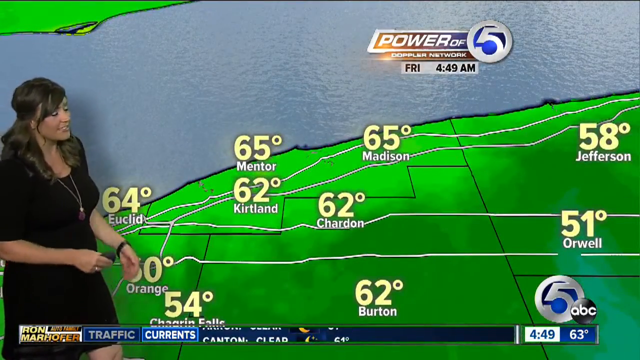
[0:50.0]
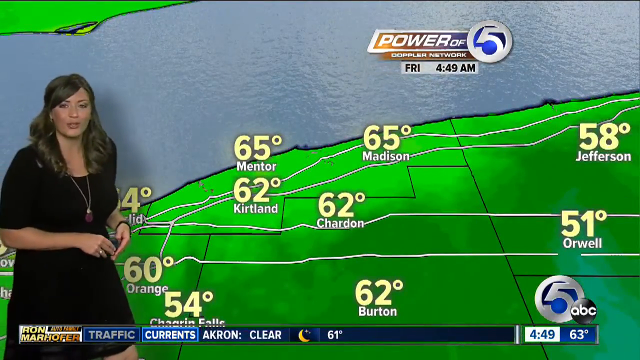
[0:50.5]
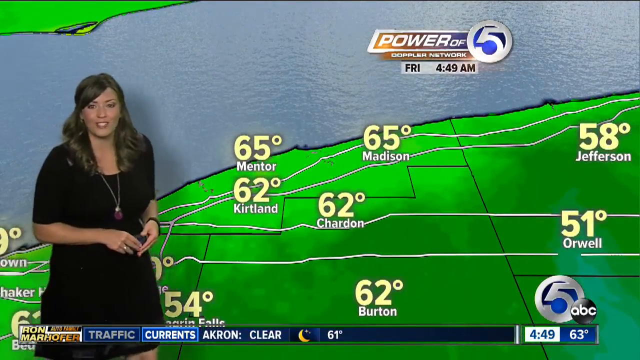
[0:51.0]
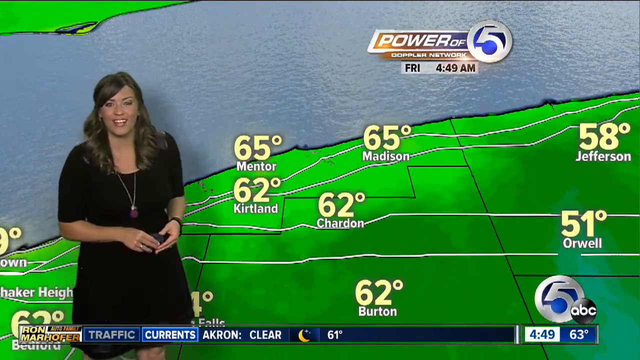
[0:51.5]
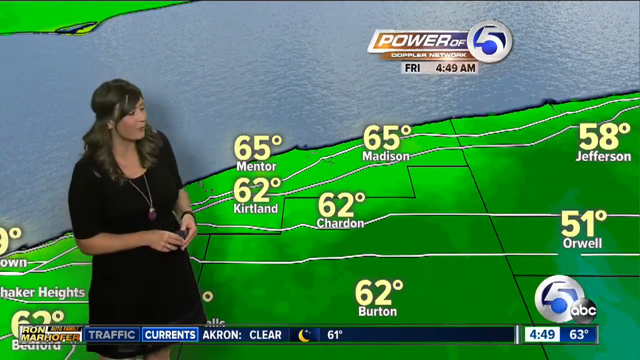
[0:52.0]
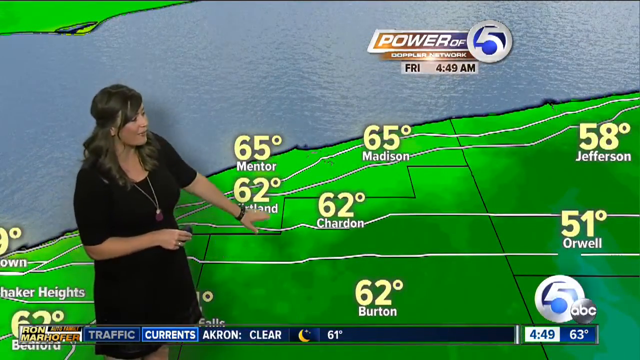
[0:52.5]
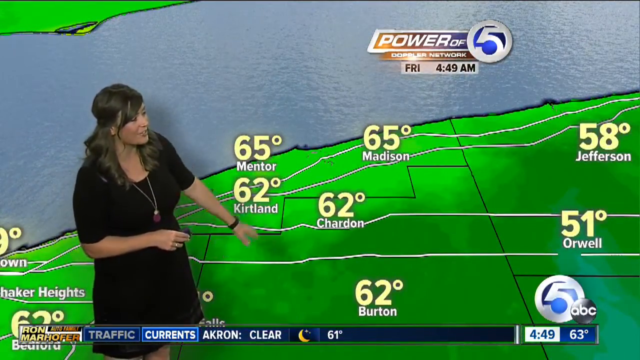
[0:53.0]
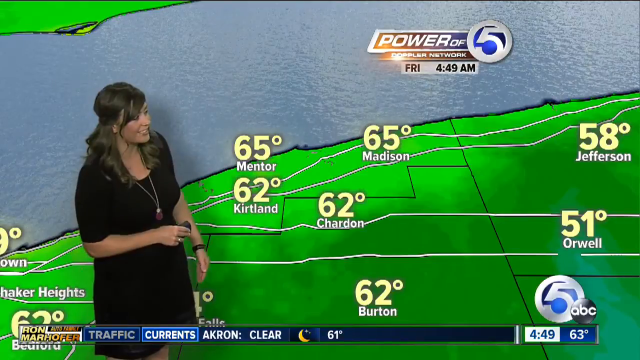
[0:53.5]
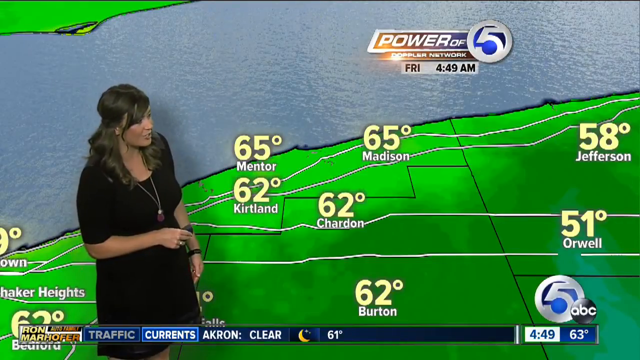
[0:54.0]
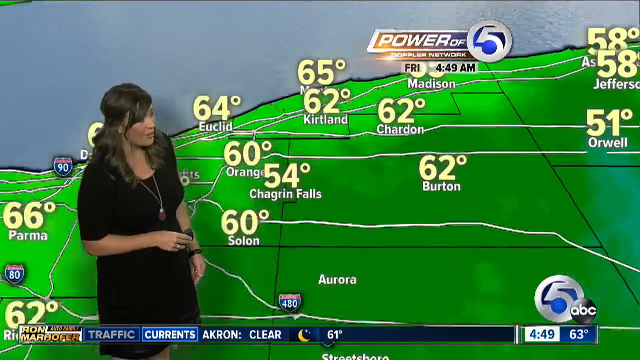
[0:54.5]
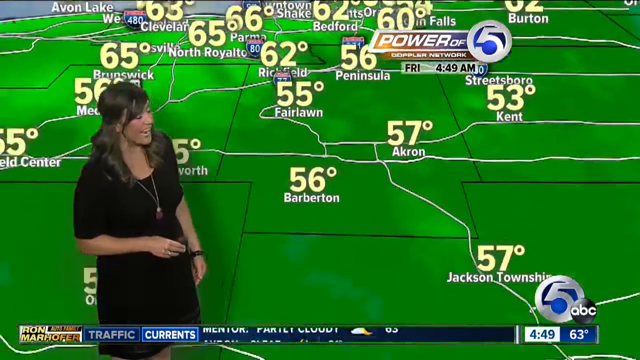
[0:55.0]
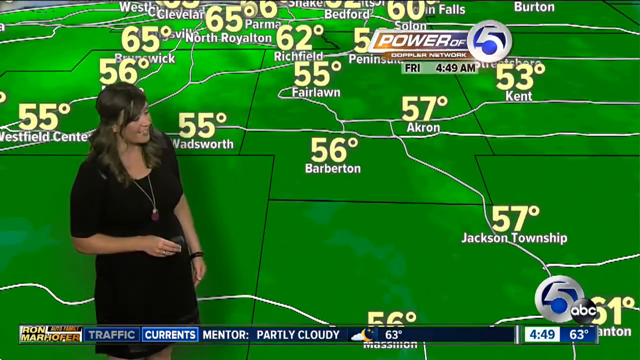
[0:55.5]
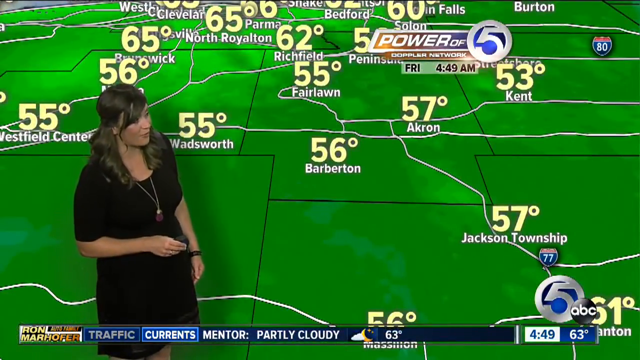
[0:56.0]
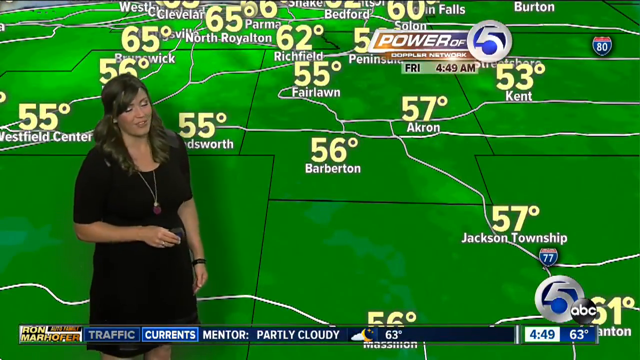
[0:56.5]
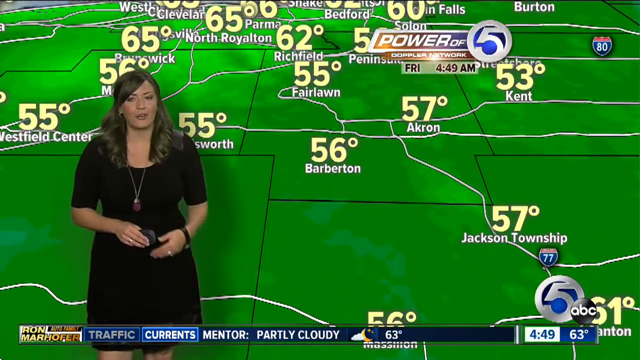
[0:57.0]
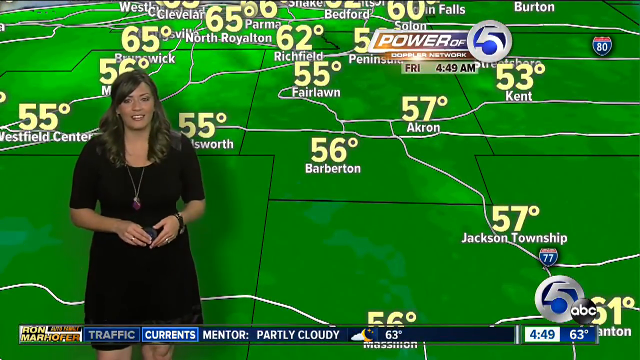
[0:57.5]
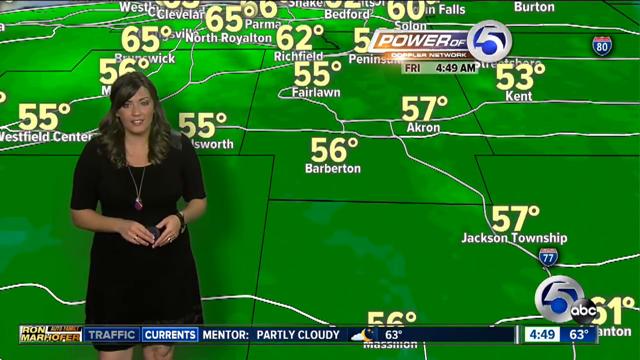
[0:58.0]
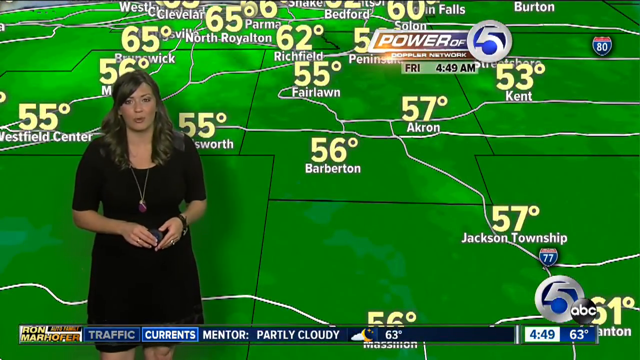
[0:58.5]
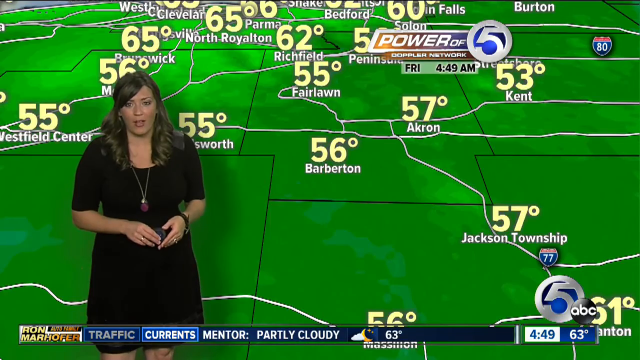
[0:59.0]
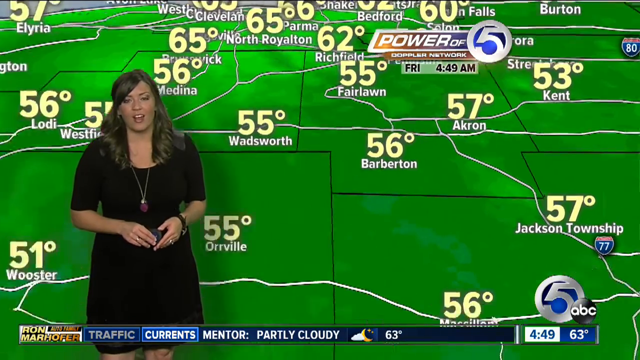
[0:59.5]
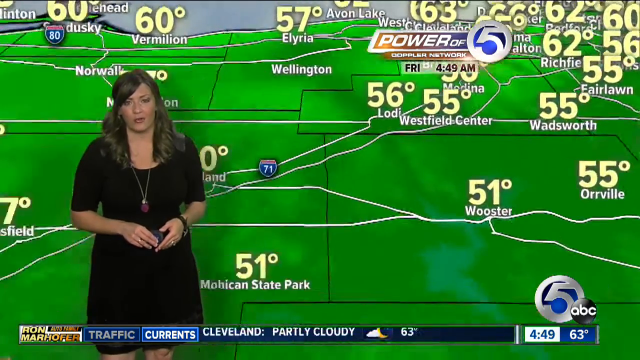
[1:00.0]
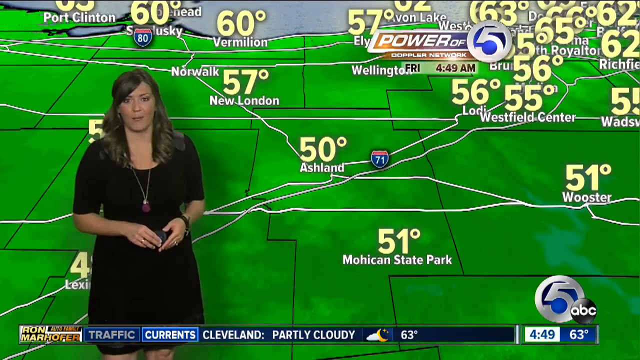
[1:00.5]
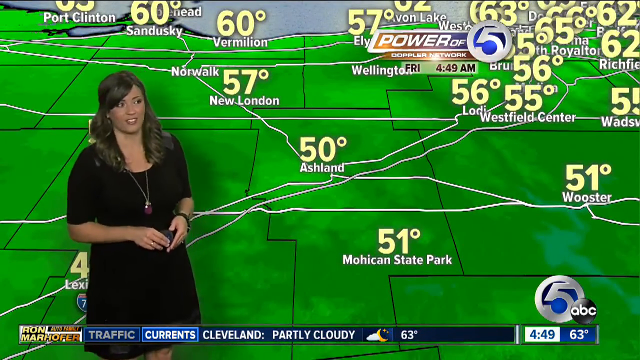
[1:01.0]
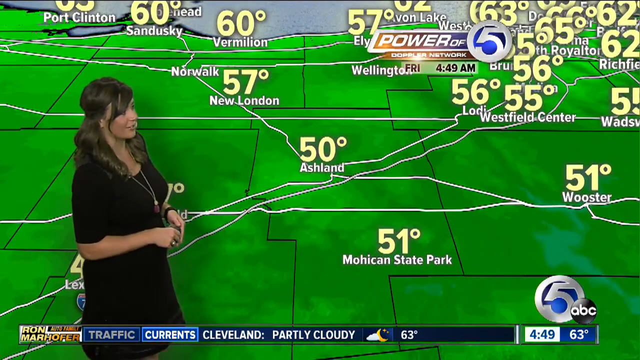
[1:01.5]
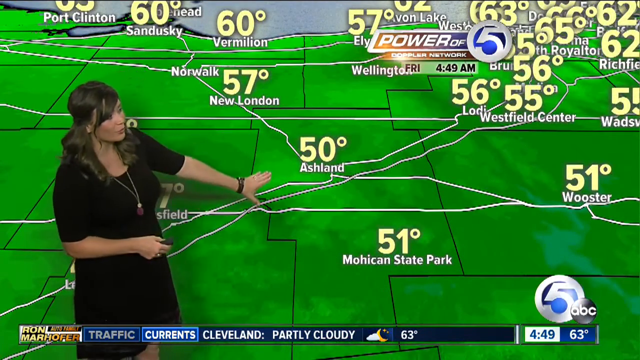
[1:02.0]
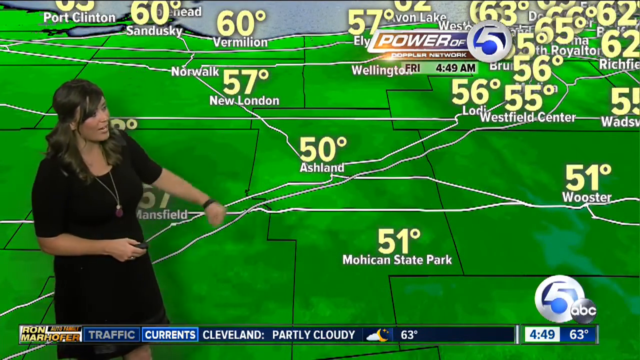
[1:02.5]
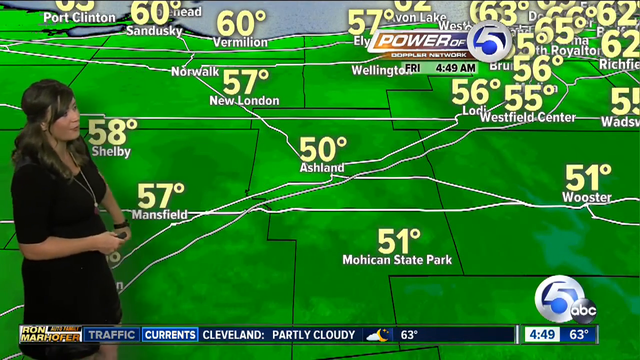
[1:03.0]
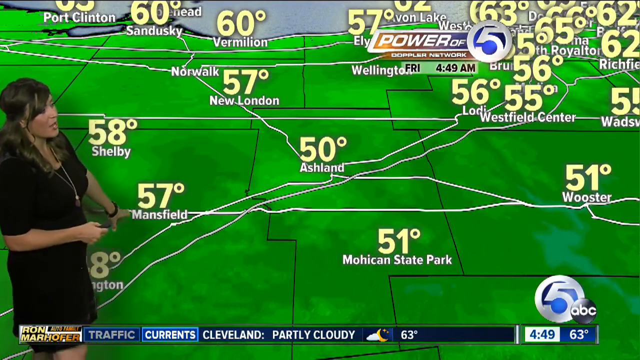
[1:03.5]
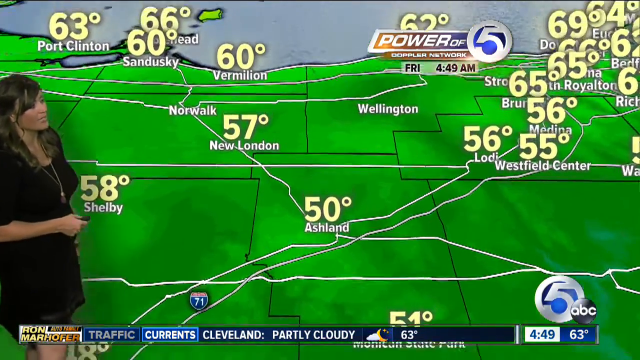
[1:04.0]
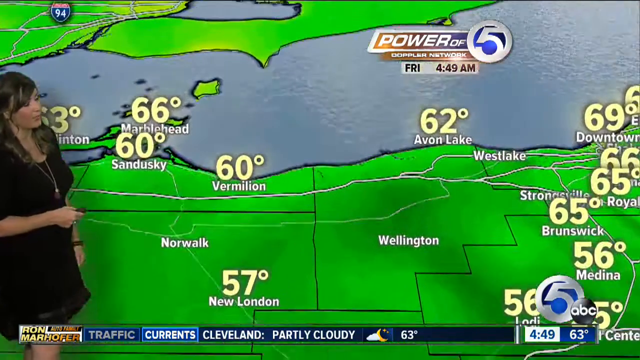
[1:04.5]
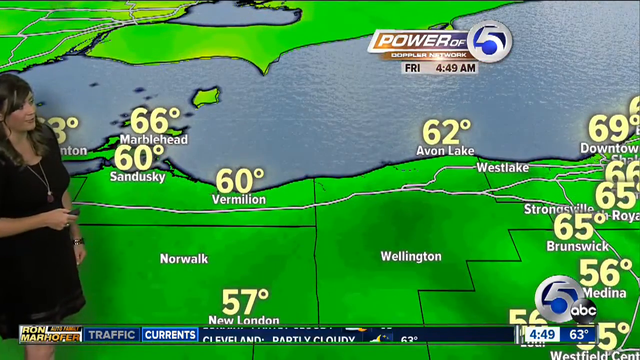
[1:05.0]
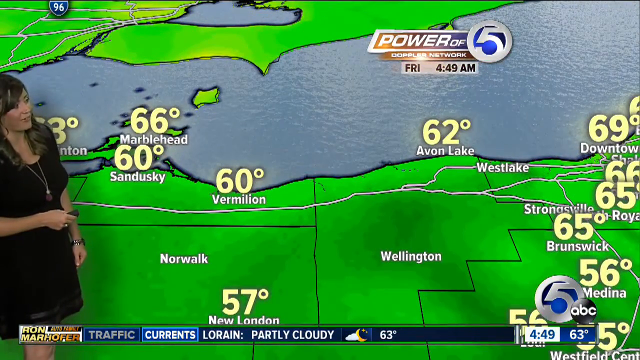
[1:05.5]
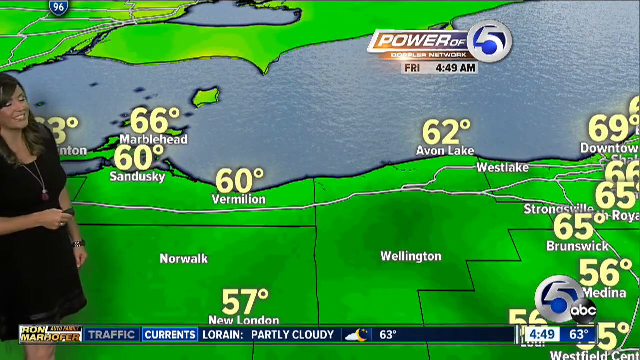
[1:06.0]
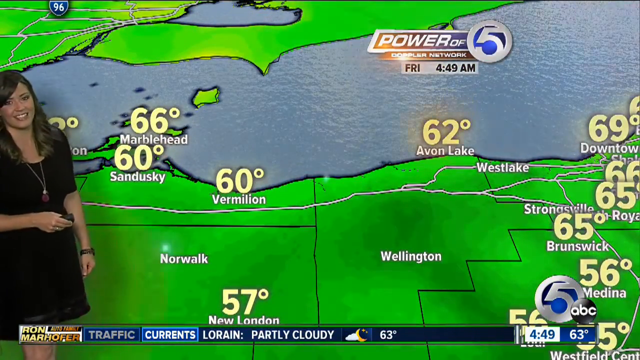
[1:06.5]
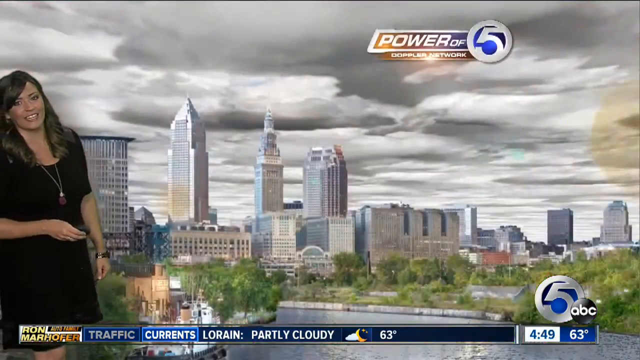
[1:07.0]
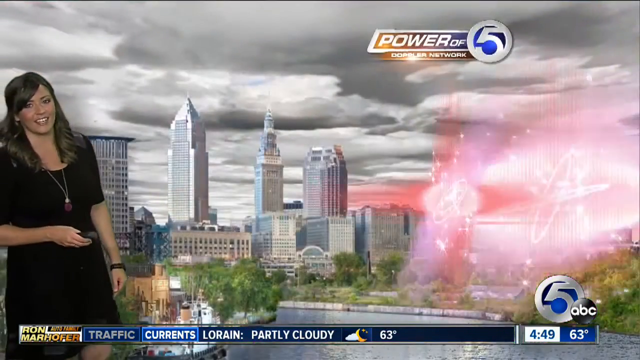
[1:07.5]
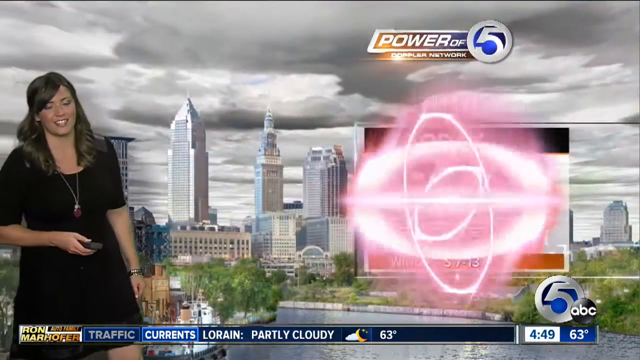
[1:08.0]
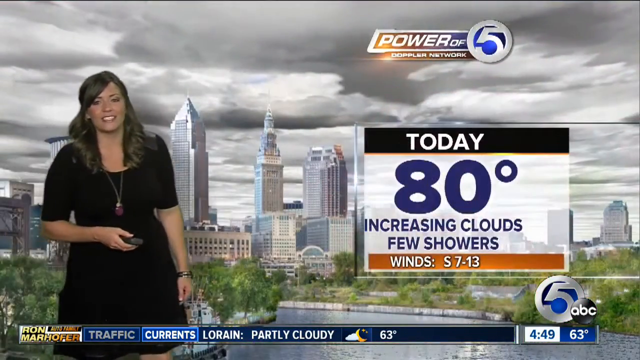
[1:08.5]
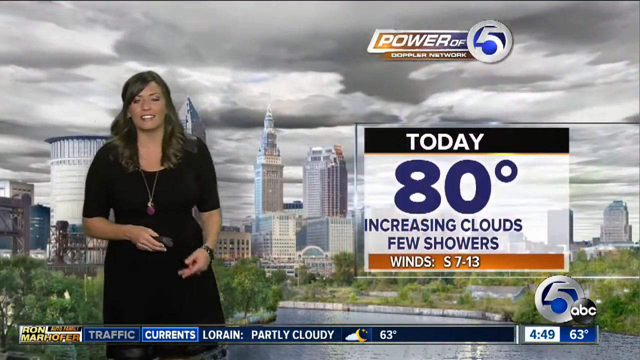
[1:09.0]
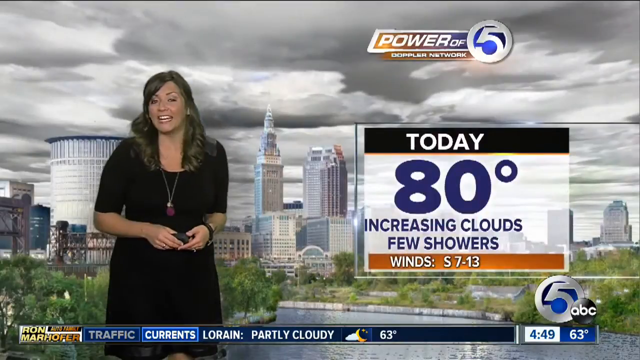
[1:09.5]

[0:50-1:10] Tracy, the weather presenter, wears a black dress with short sleeves and a long chain that hangs down right below her breast with a large medallion. Her hair comes down to the collar of the dress and curls to the outside, and she has a content look and a nice smile. The background map is zoomed in to Madison, Mentor, Kirkland, Chardin, Orange, Euclid, Burton and Chagrin Falls, with temperatures ranging from 54 to 68 degrees. The top of the screen shows Friday at 4:49 AM and Channel 5 ABC. The map zooms in once more on Vermilion and Sandusky. A message then pops up on screen showing a large 80 degrees and the area it applies to.